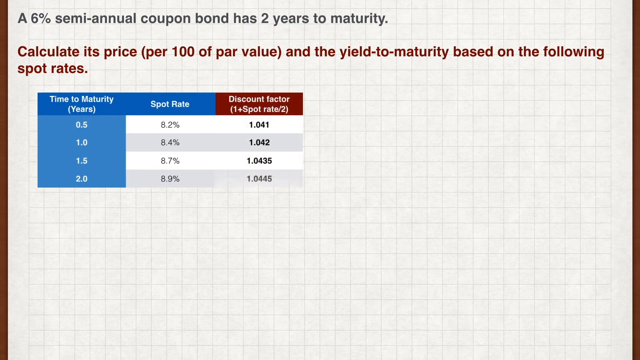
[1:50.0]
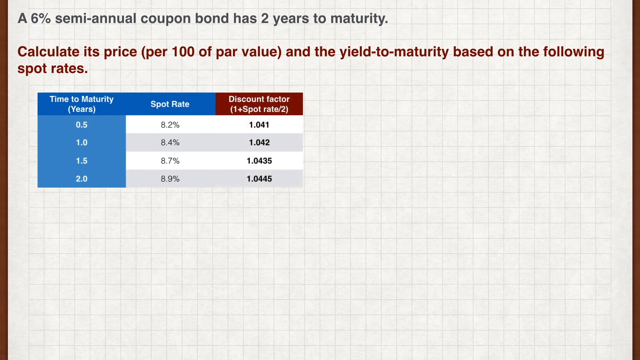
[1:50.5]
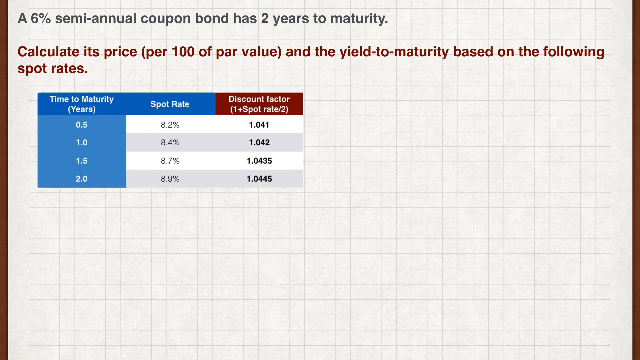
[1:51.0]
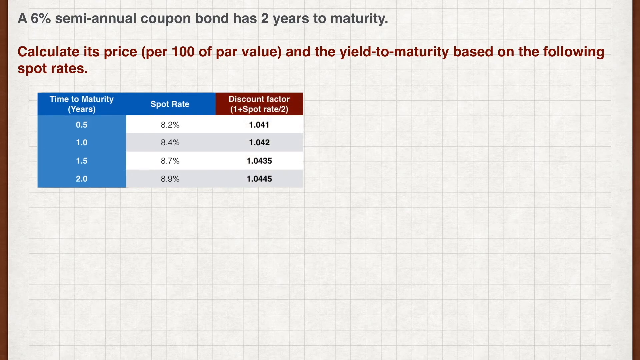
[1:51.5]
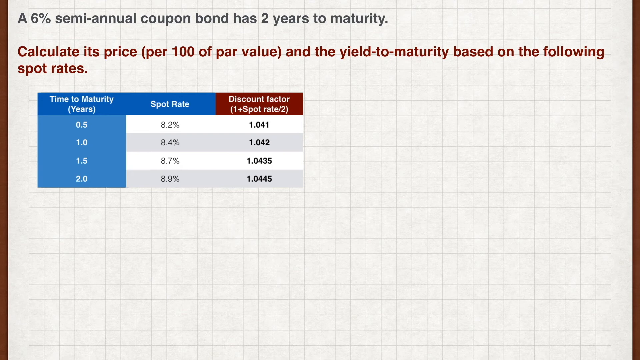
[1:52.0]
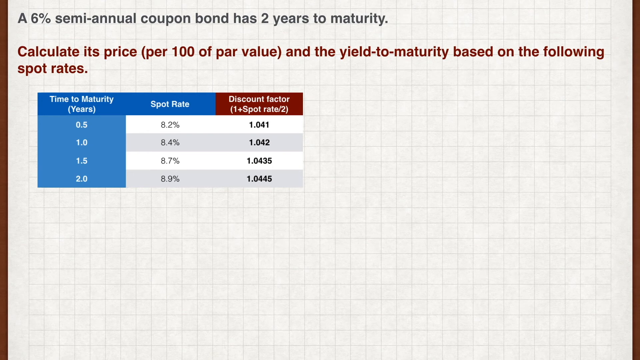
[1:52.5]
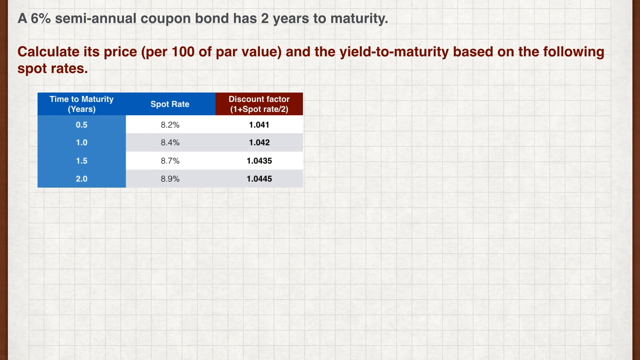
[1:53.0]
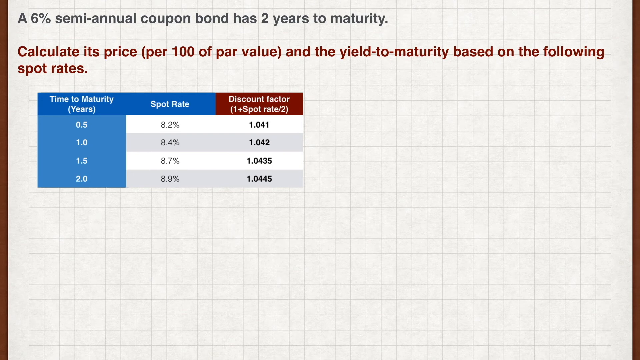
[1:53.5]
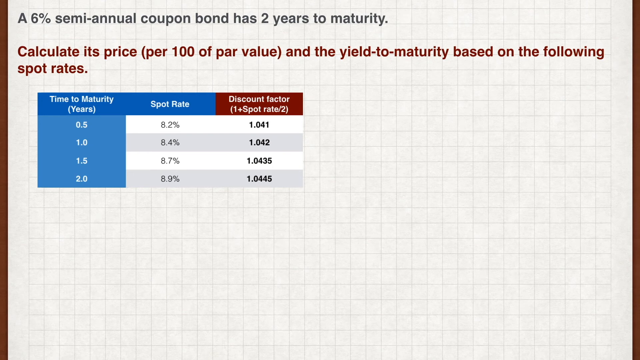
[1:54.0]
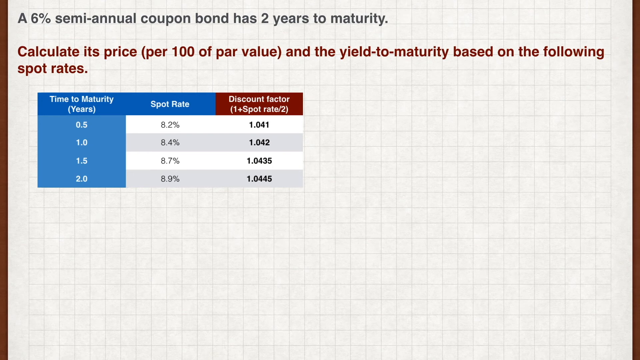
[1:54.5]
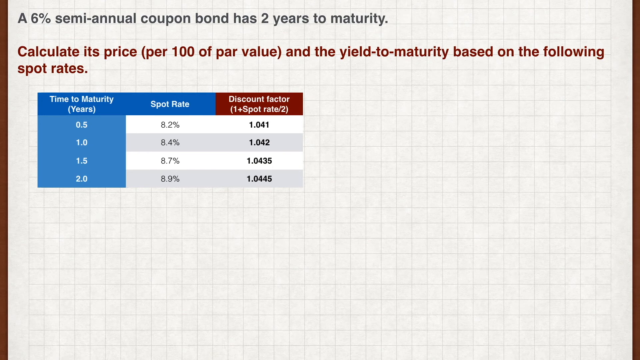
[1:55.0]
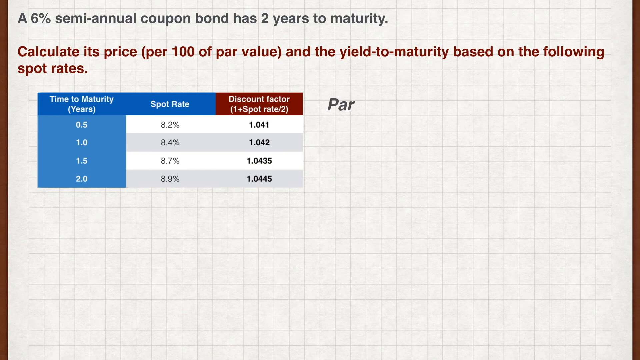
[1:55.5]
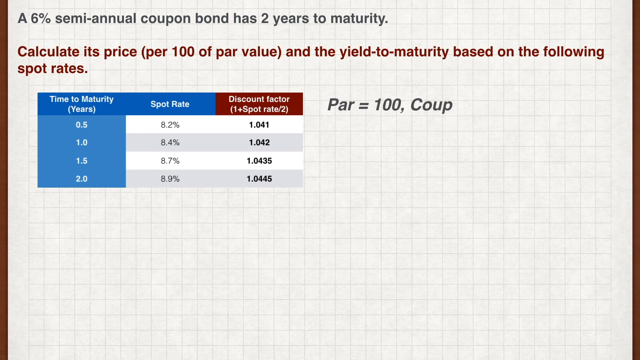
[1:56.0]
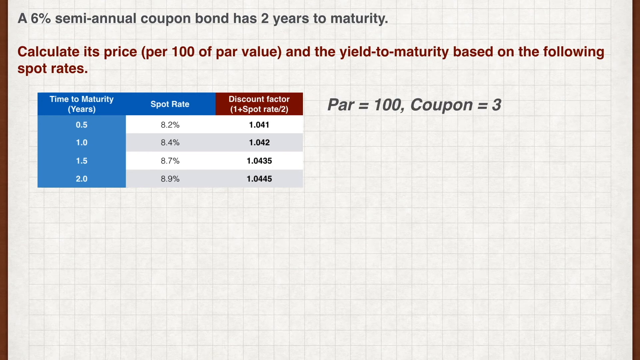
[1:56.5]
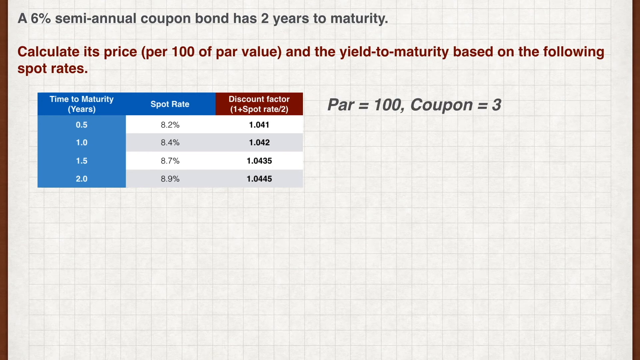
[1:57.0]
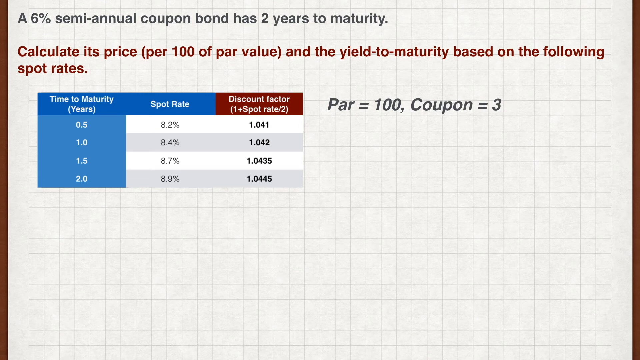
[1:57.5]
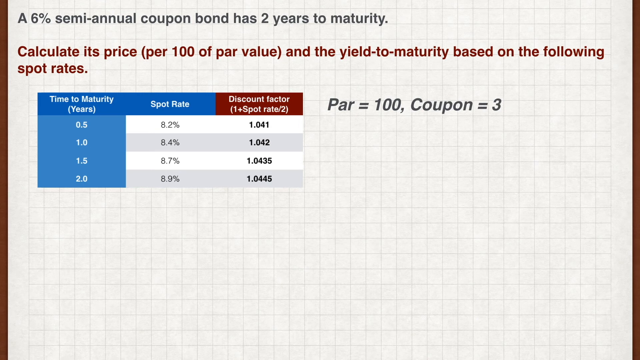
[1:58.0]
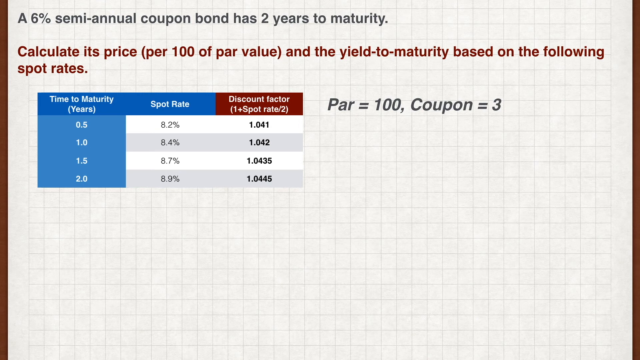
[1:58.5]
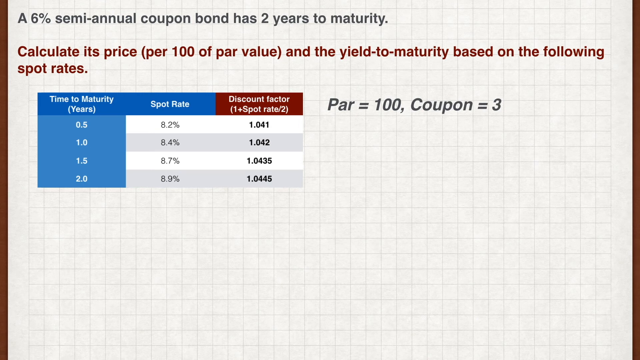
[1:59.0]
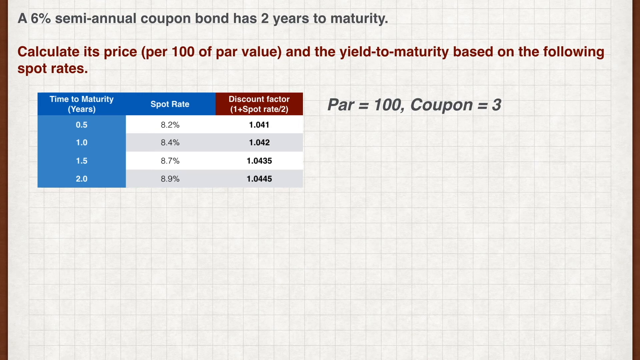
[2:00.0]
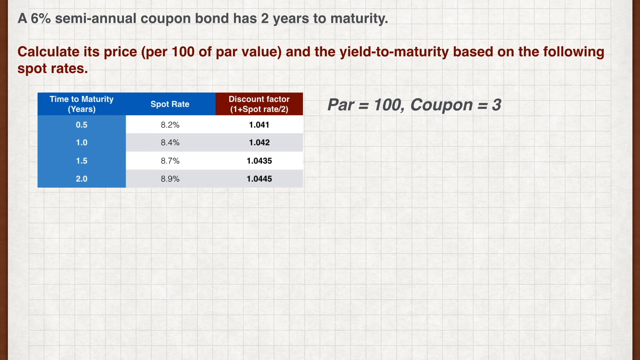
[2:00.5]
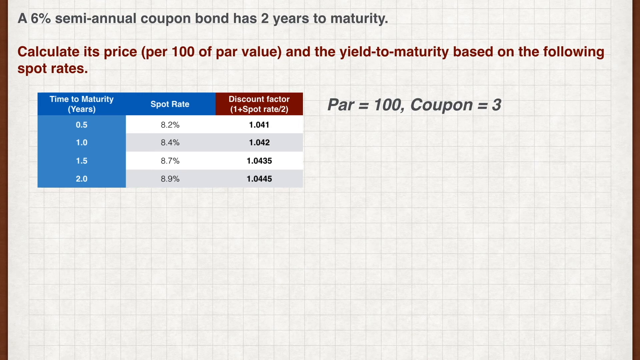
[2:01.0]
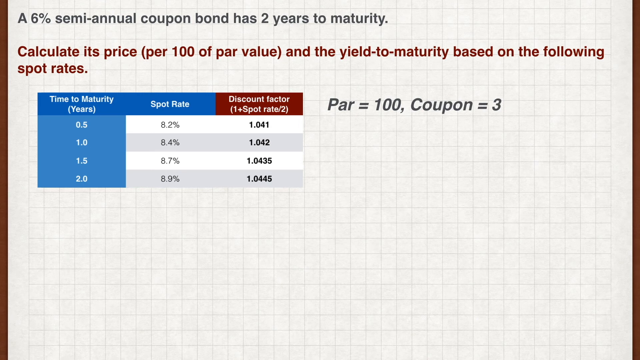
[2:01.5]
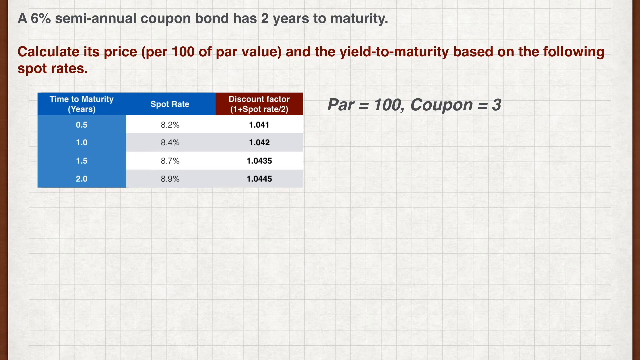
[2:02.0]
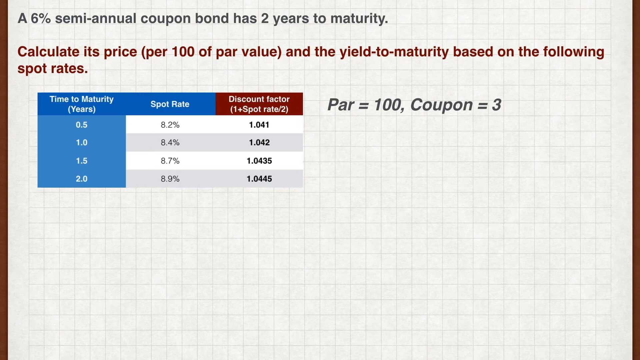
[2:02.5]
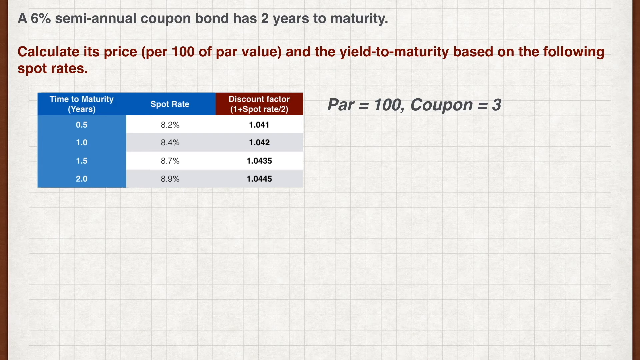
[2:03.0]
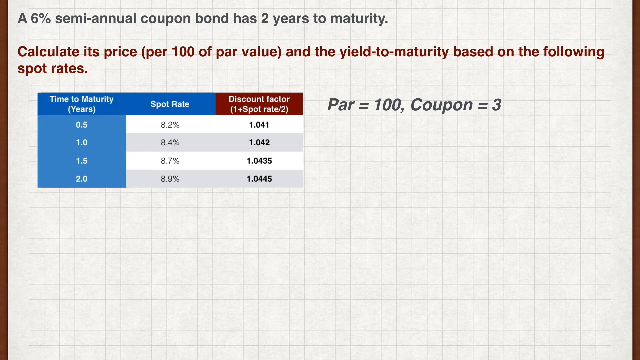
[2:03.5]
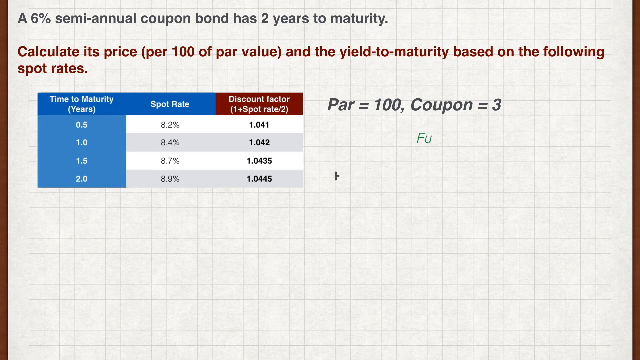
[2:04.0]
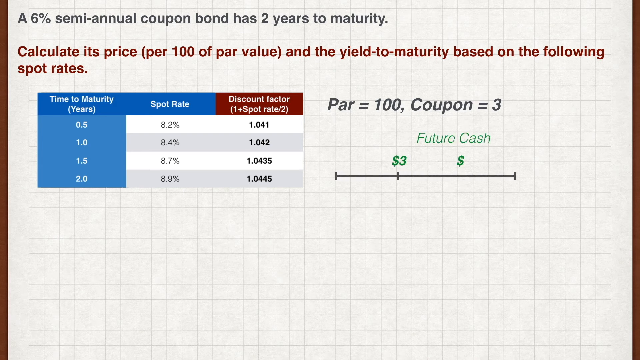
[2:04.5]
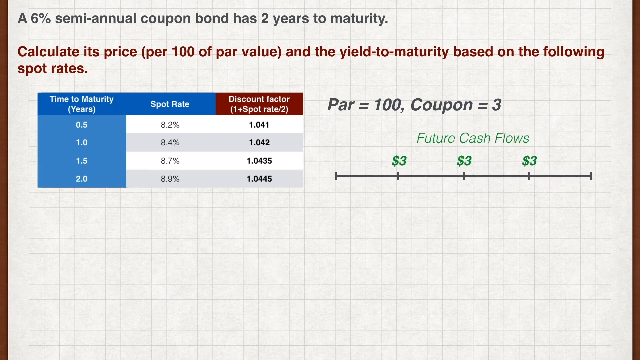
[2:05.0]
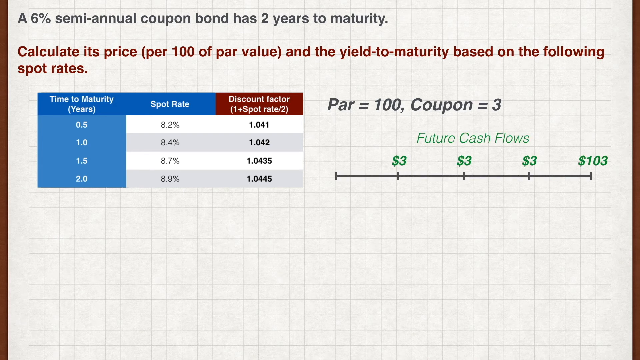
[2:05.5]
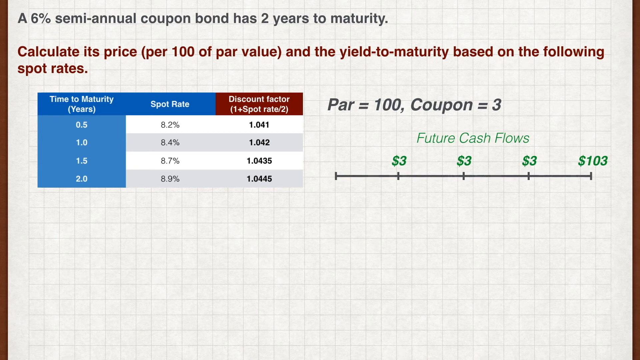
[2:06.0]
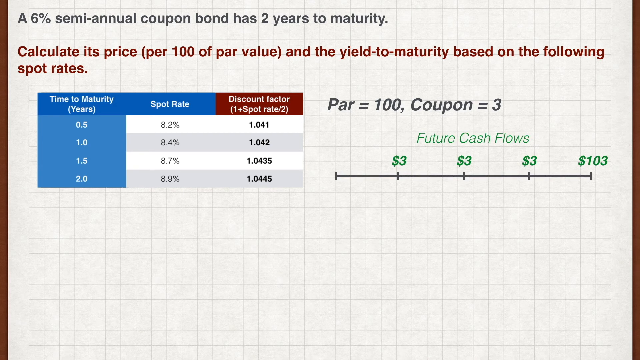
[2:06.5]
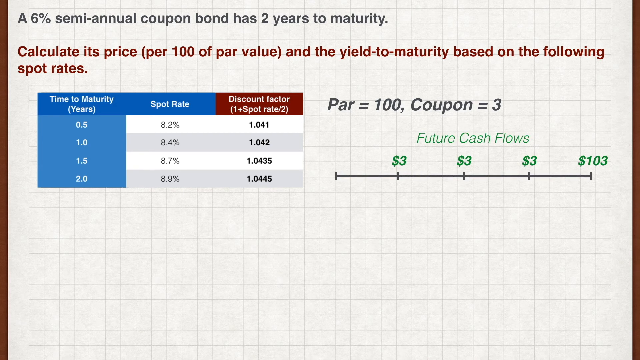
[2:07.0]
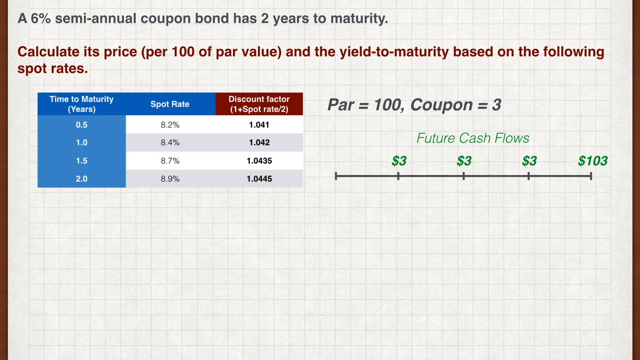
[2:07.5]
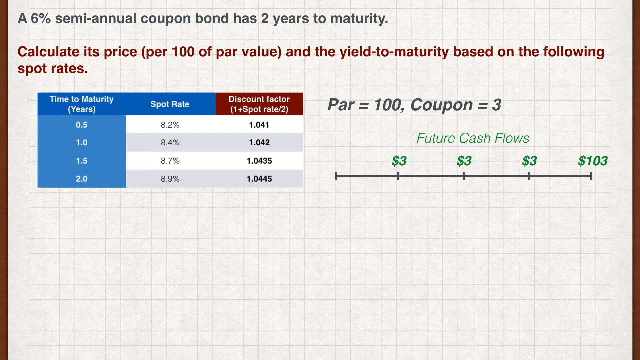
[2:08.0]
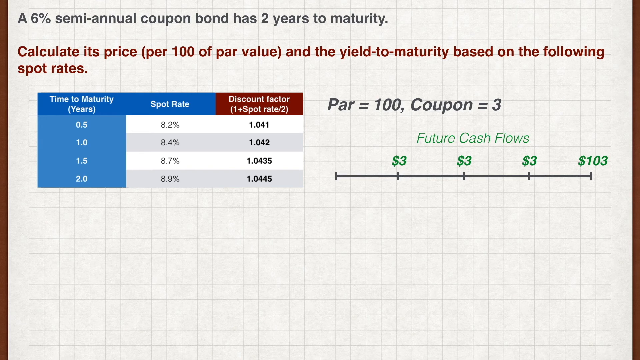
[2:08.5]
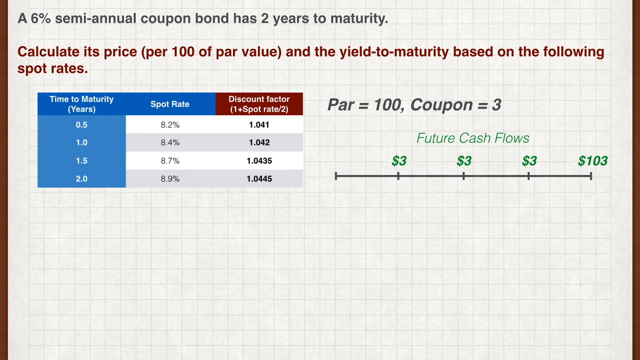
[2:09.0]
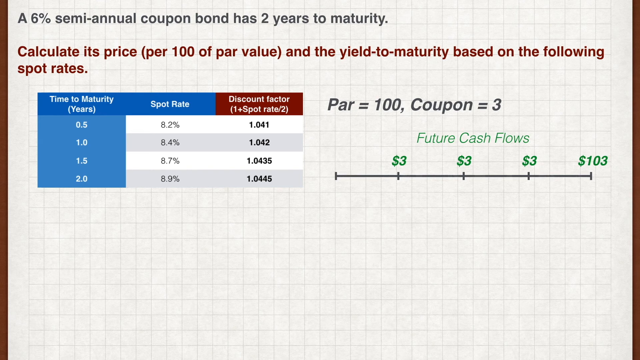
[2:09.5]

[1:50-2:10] The same chart with time to maturity and spot rate remains, and the text still says "calculate its price for 100 par value and the yield to maturity based on the following spot rates". A third column in deep red is added to the chart, labeled "discount factor", then the spot rate divided by 2. Its values are 1.041 for the half year, 1.042 for 1 year, 1.0435 for 1.5 years and 1.0445 for 2 years. A graphic then appears with R = 100 and coupon = 3. Underneath it is another bar chart labeled "future cash flows", showing $3 at three different increments and $103 at the end.